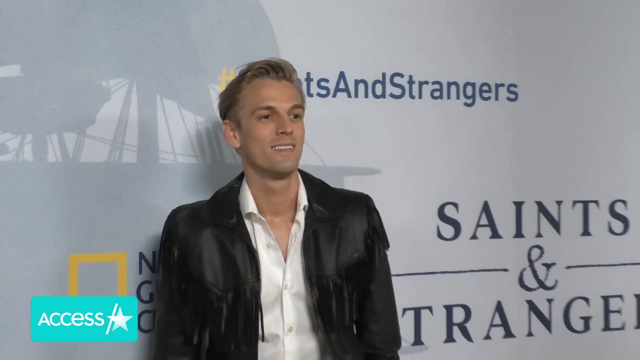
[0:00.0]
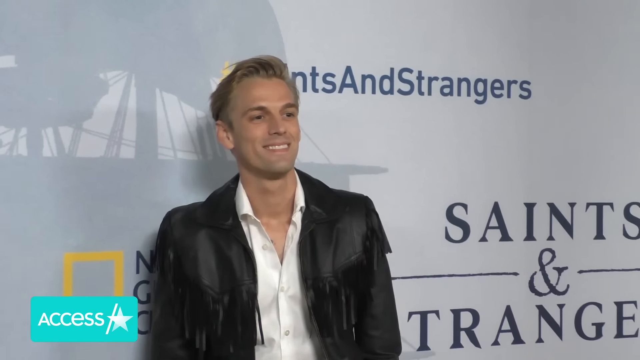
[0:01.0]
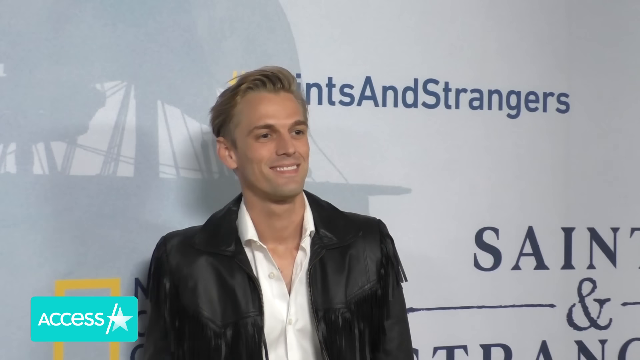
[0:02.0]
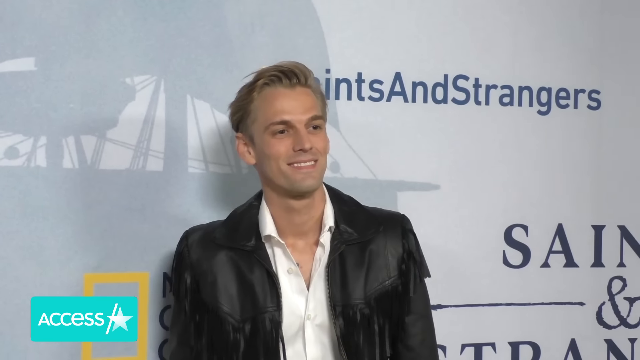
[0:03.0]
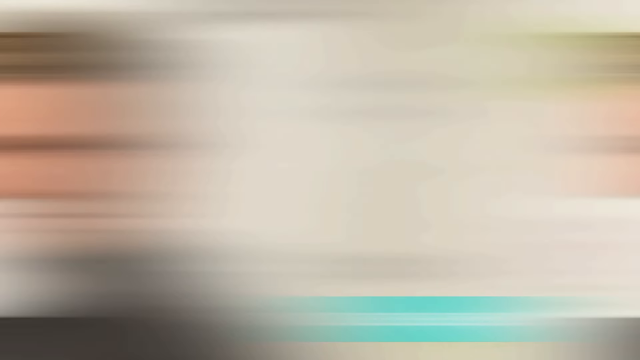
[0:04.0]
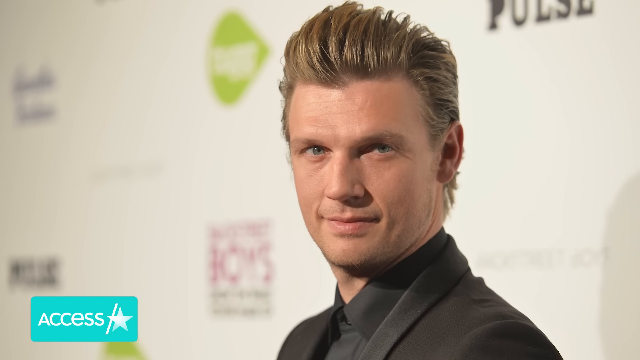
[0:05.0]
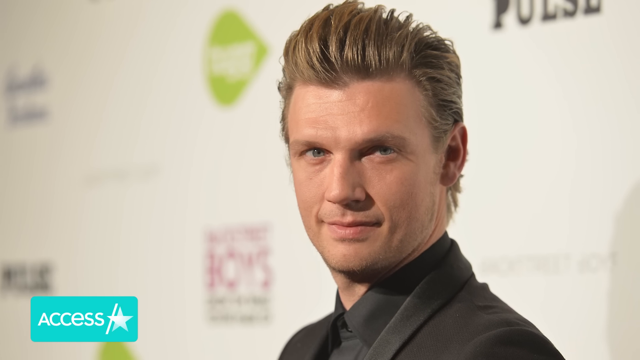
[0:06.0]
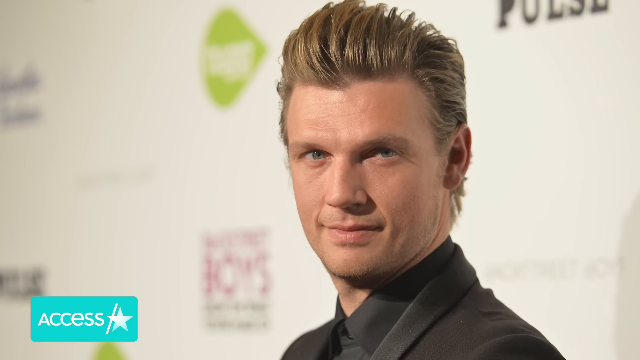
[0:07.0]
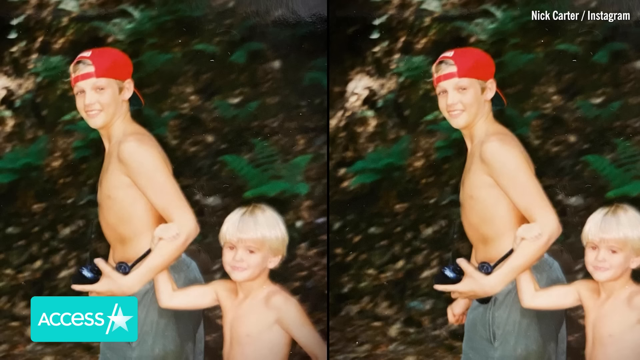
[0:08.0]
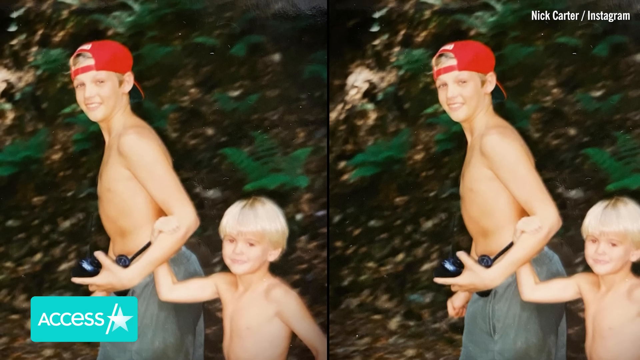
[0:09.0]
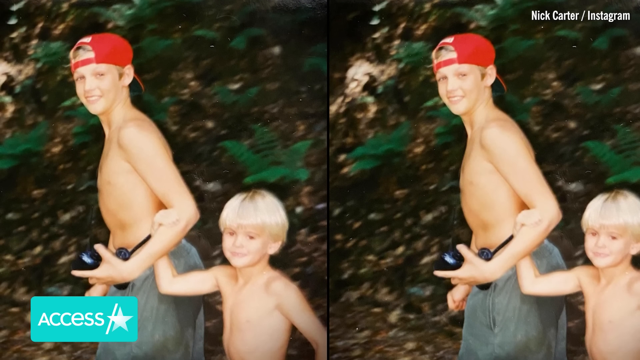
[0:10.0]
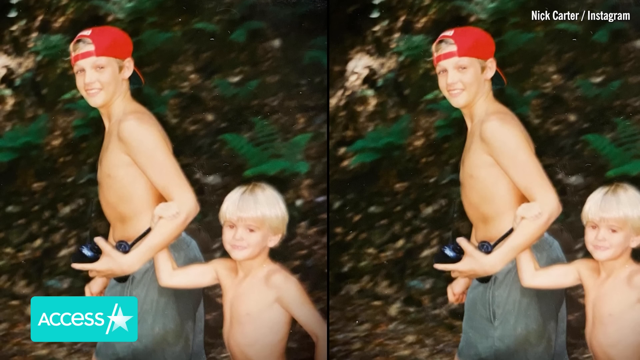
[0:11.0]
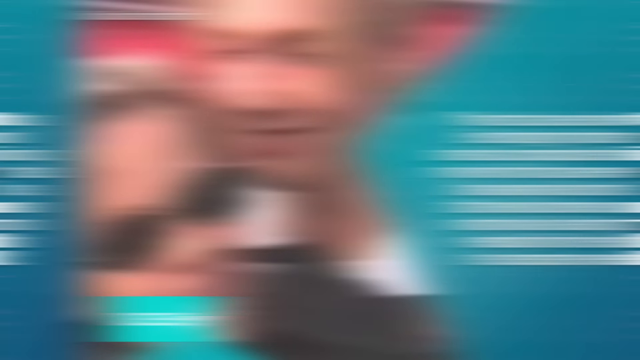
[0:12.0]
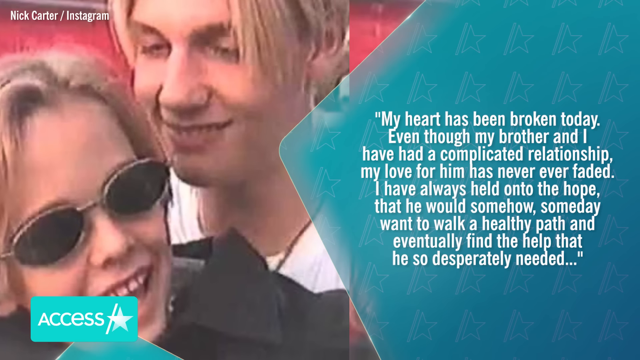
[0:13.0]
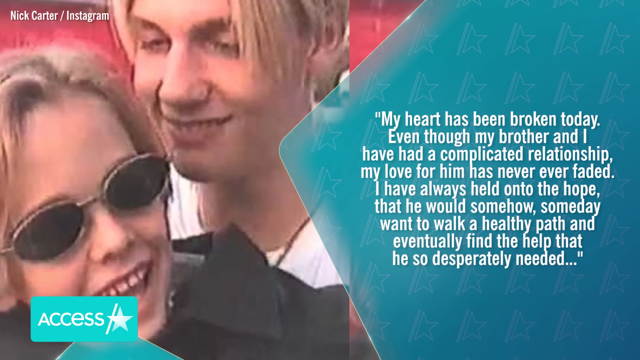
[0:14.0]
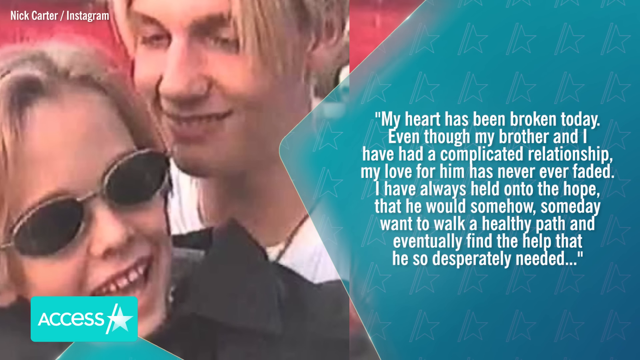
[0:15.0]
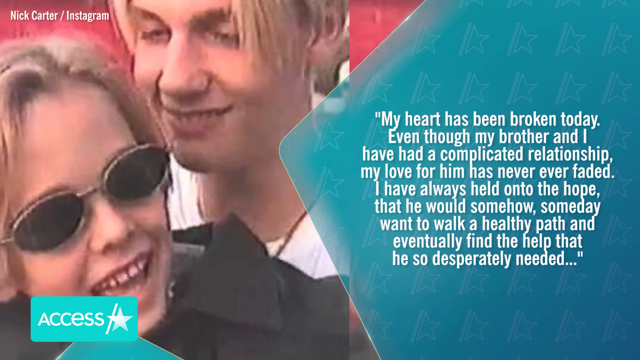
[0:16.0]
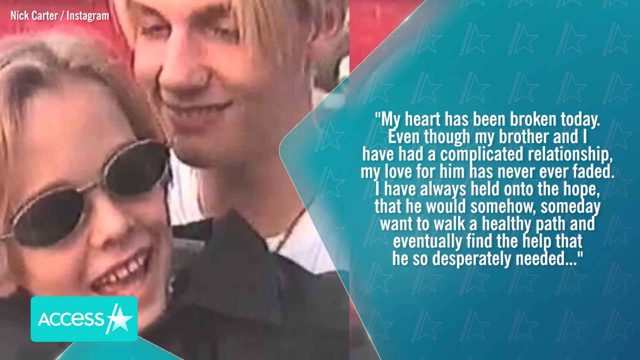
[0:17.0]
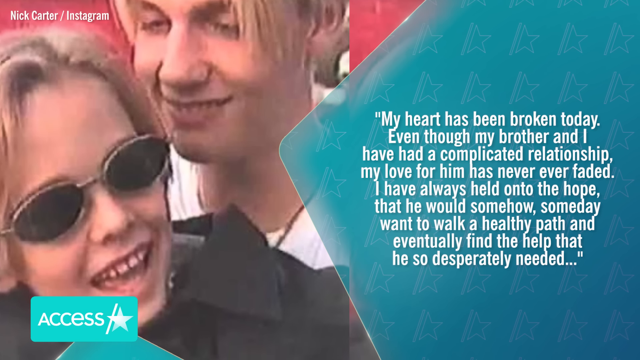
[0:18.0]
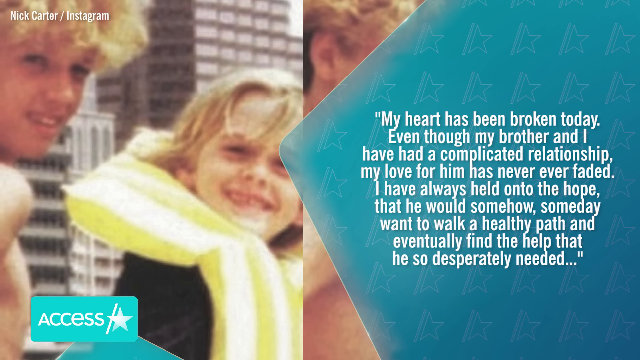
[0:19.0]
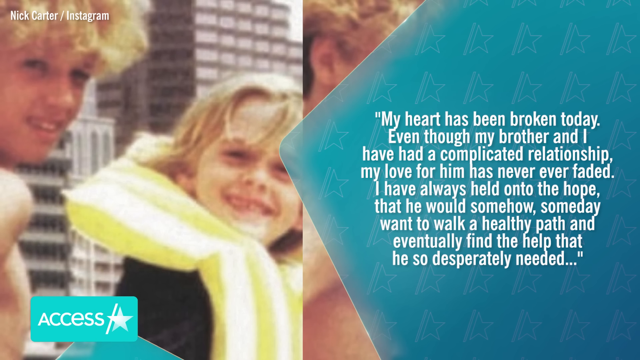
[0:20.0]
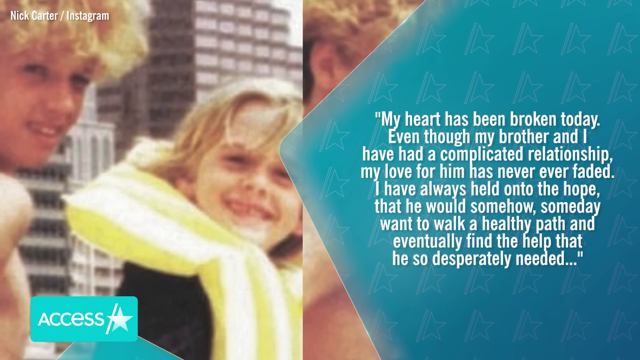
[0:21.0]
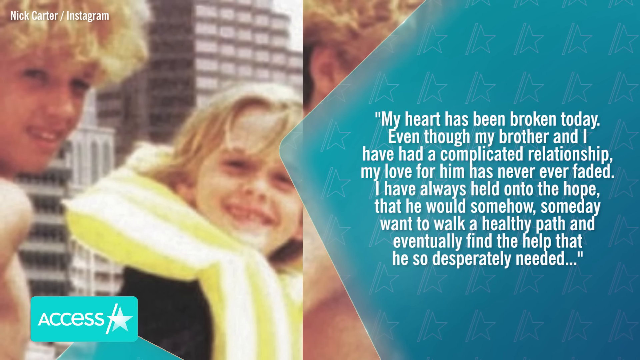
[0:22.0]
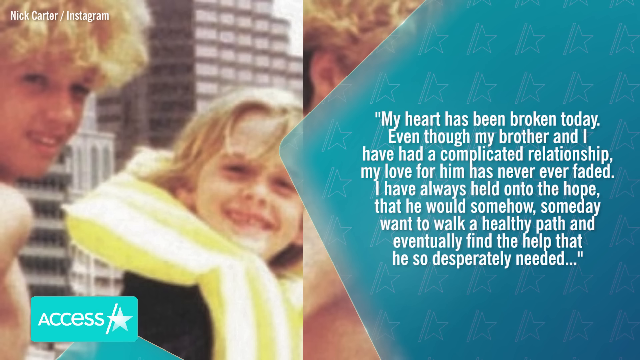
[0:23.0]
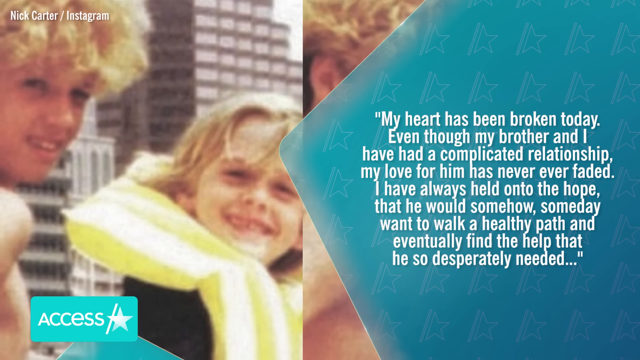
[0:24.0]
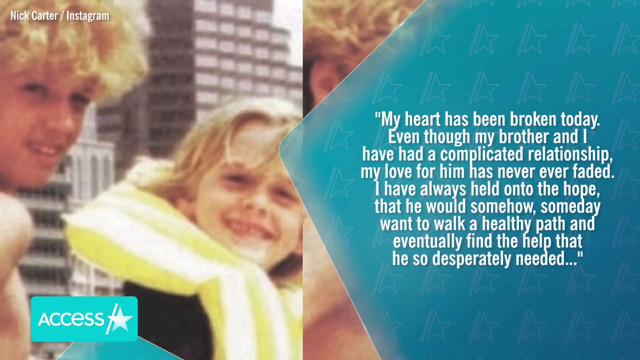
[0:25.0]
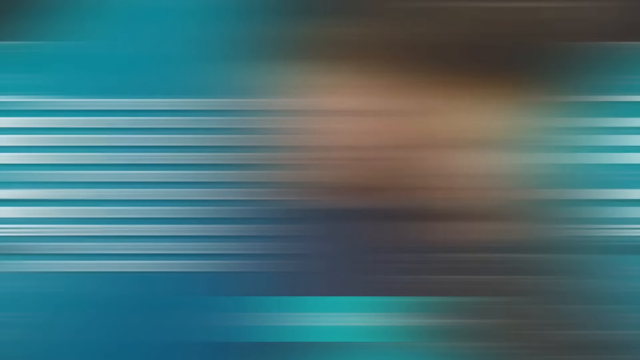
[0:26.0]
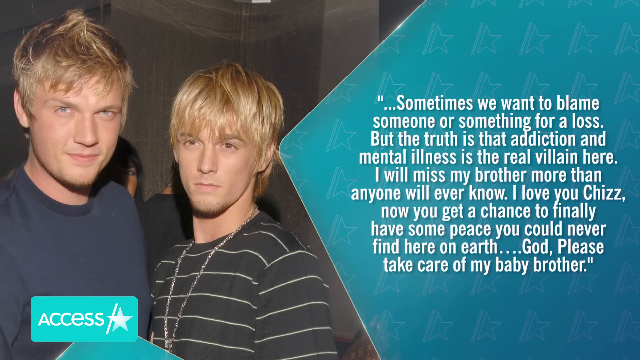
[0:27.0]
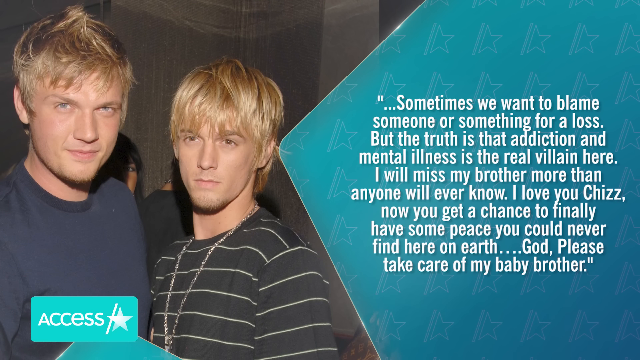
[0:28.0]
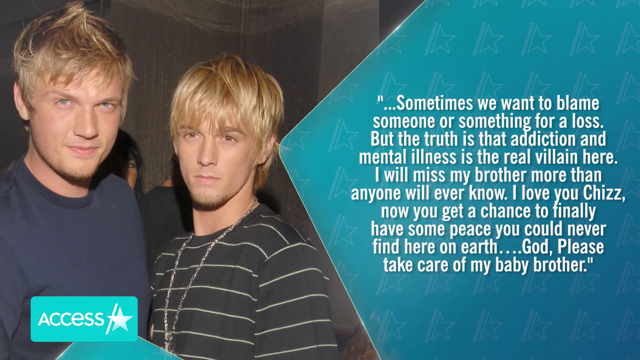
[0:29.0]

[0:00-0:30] A famous singer, apparently Aaron Carter, is in the center. He wears a leather jacket over a white collared shirt with the top part unbuttoned, and his blonde hair is neatly combed to the side. He smiles and looks very happy as pictures are taken of him; the people taking them are not visible, but flashes of light from the cameras are. Behind him is a board with multiple different sponsors on it, and this appears to be some sort of event. The scene shifts to his brother, a former singer from the boy group the Backstreet Boys, apparently Nick Carter. Next come two childhood pictures of them together as little kids. In the bottom left corner is a label that says "Access" next to a star, indicating the footage is from the show Access Hollywood. The scene then shows them when Nick Carter was a teenager and his younger brother was still a child, with a quote on the right side about how sad the older brother is that his younger brother passed away. More childhood pictures appear on the left side while the quote remains on the right.